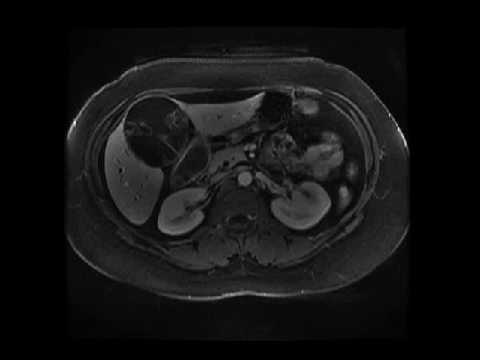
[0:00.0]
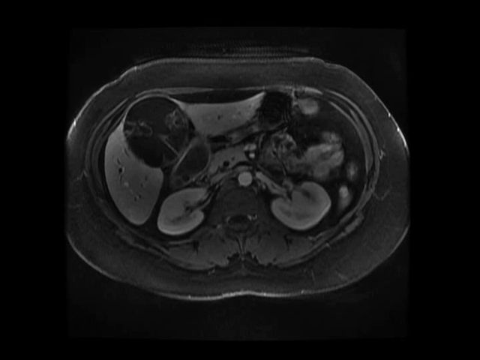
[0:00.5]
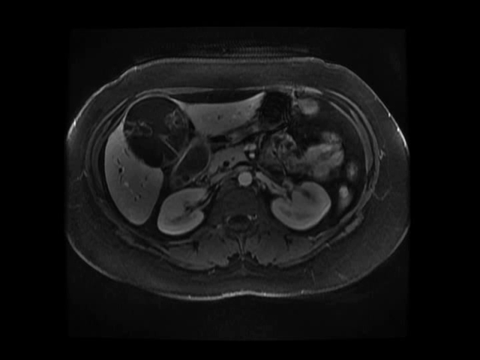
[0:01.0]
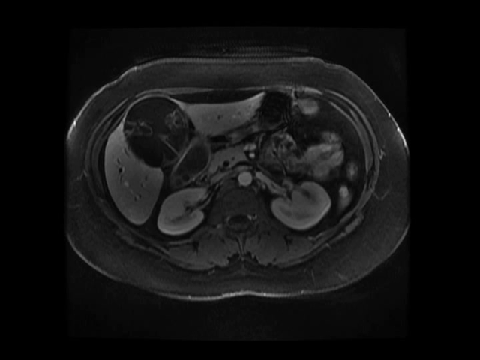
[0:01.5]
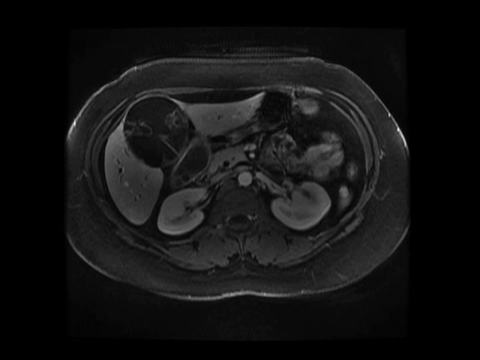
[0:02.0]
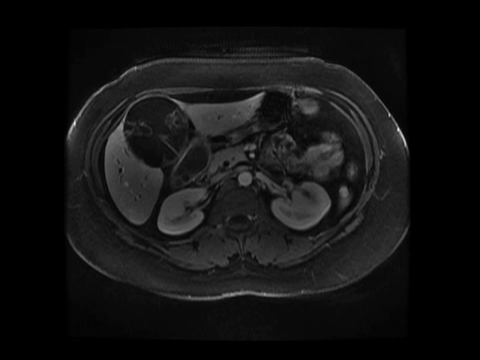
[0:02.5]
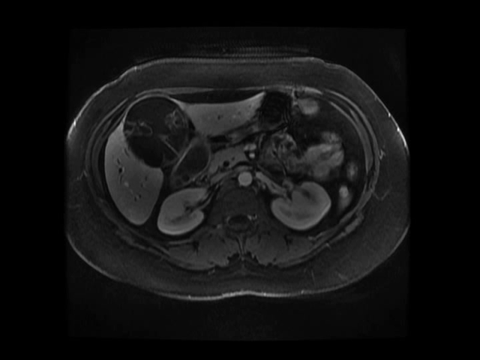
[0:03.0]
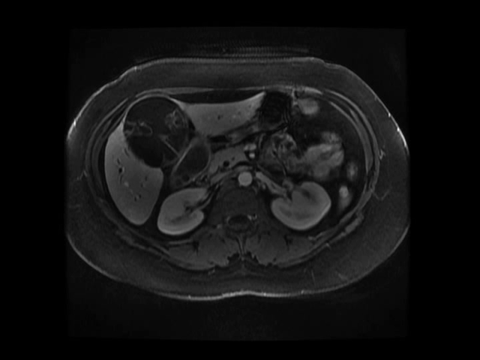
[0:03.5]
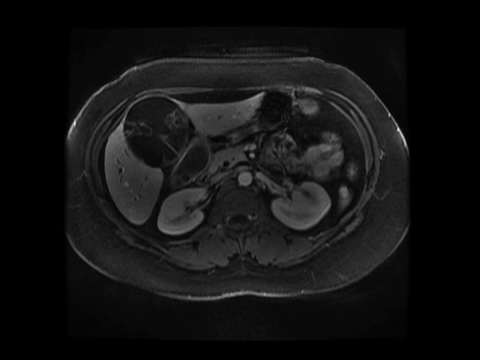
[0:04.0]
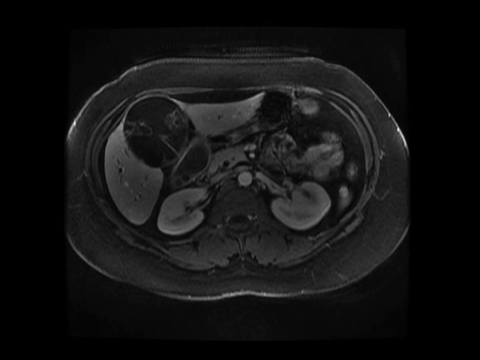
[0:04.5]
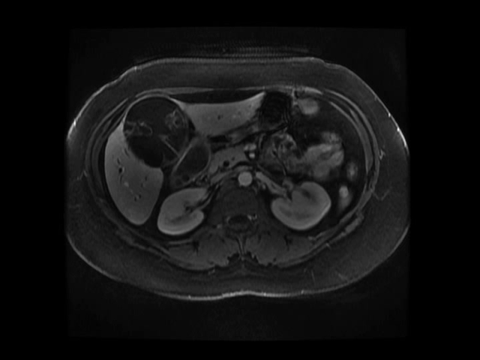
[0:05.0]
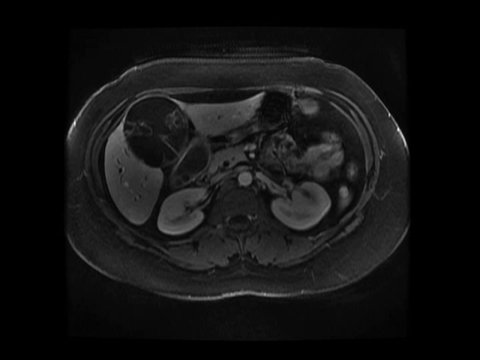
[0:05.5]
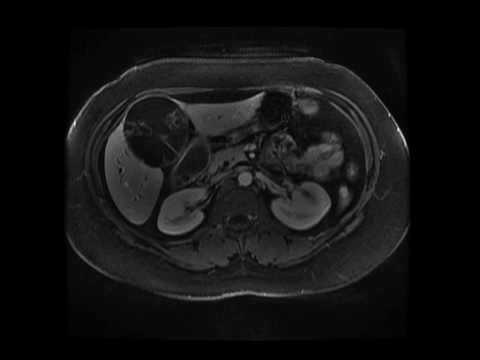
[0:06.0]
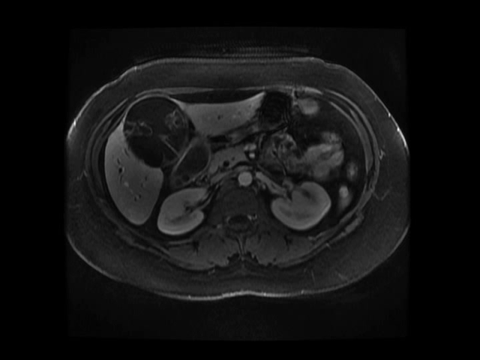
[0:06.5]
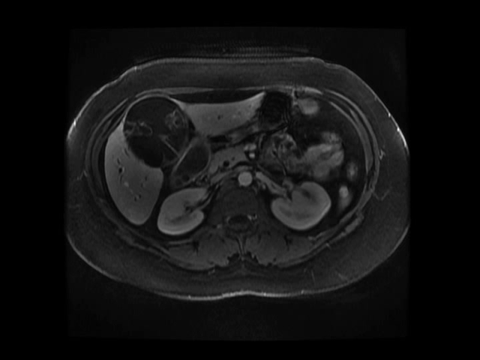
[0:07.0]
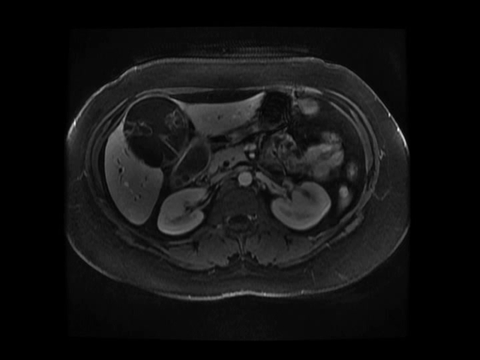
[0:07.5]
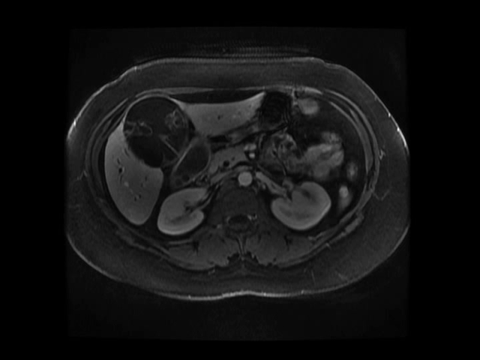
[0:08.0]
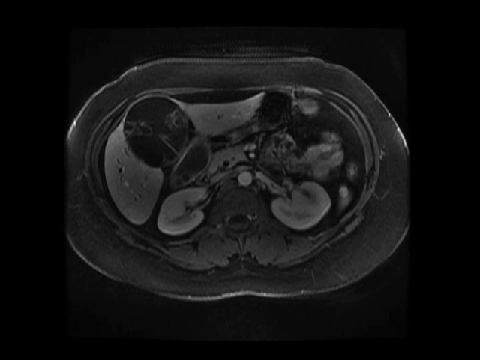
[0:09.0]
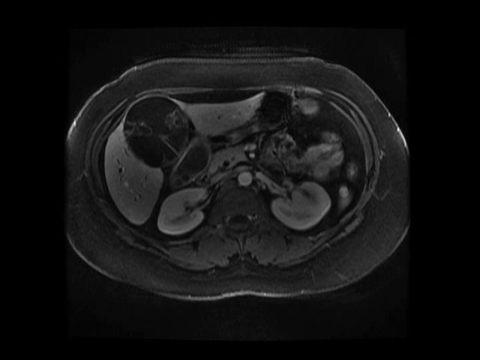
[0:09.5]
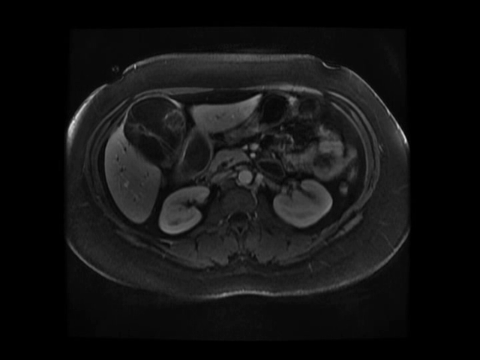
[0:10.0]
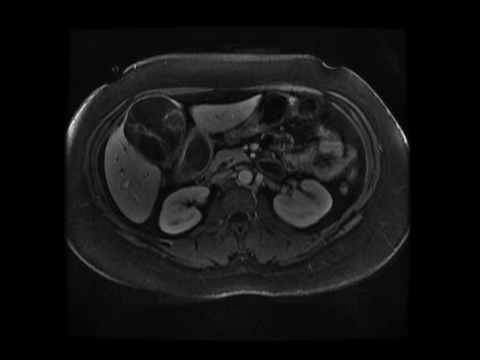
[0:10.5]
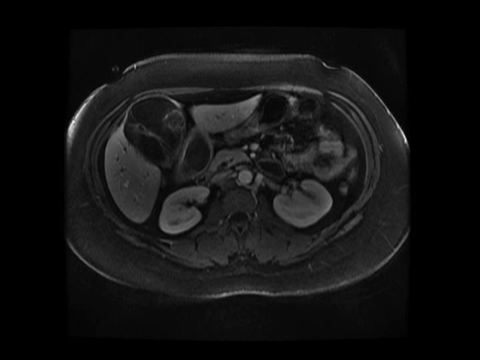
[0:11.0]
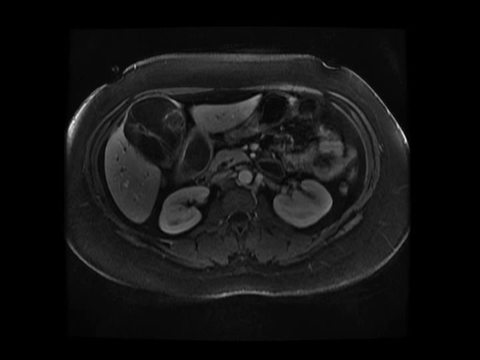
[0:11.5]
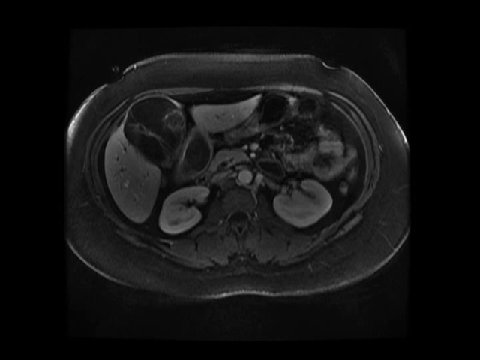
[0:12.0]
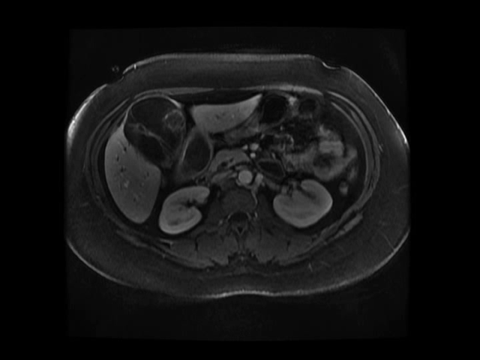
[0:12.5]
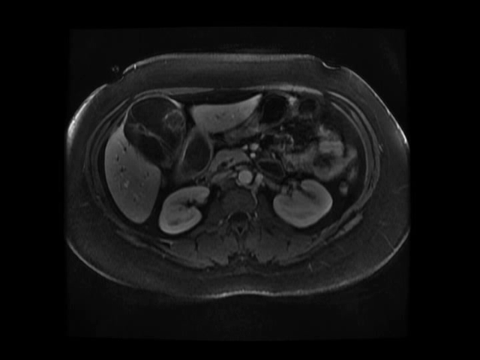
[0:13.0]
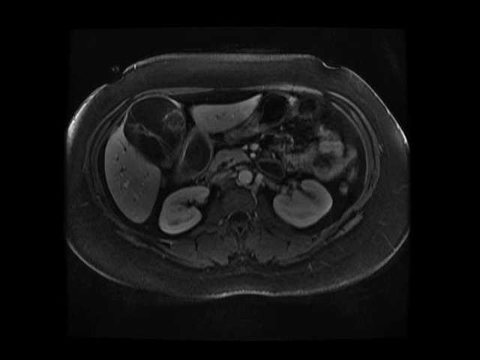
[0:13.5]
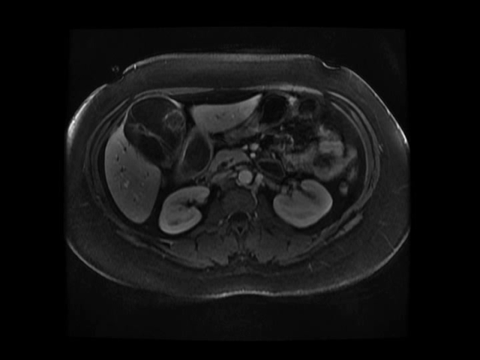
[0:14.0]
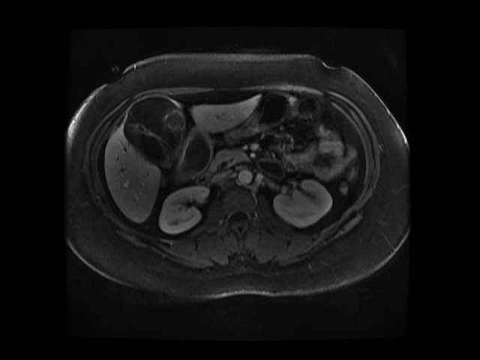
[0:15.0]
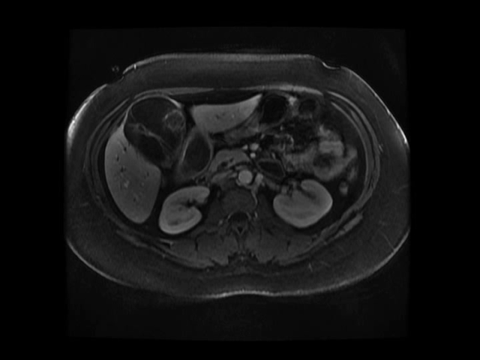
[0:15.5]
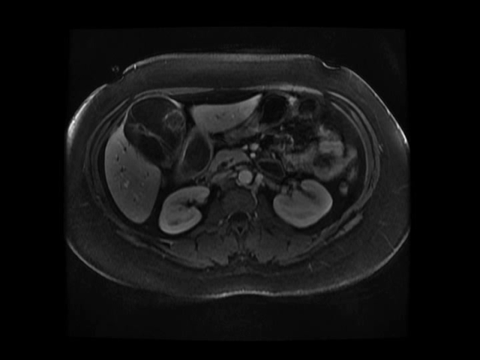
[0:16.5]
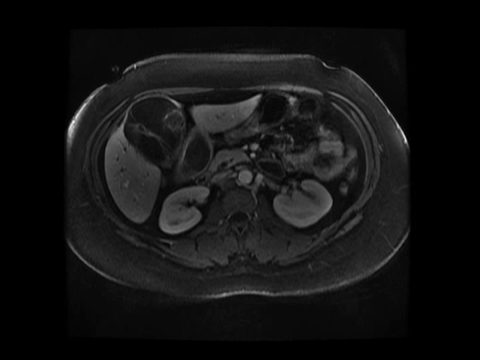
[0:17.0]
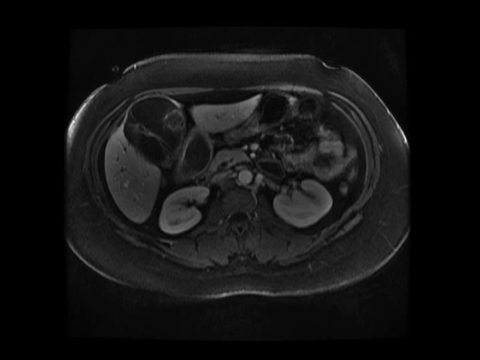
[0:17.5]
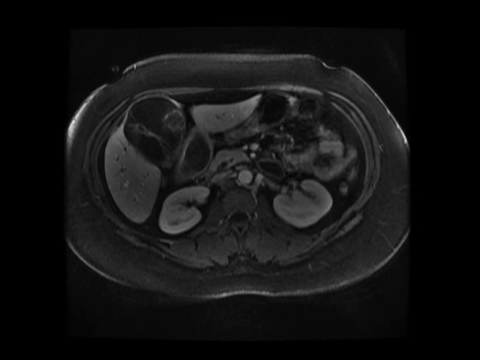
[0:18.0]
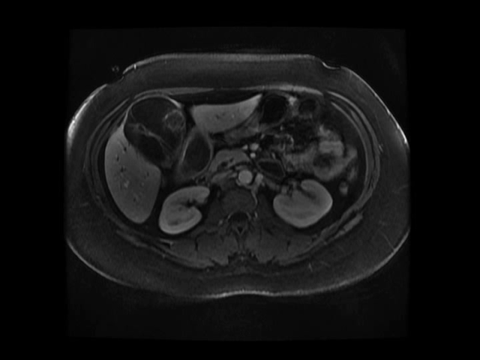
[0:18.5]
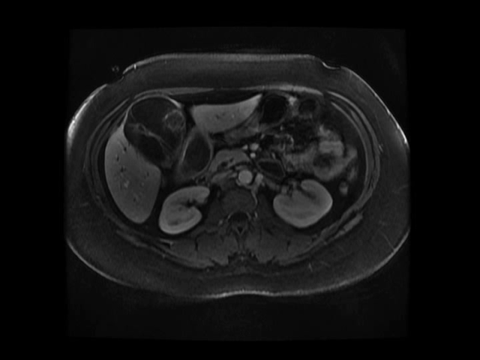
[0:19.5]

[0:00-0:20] A grayscale image appears that is probably an MRI. It seems to show a view from above, possibly of the abdomen or at least the central part of the body. The shape is oval, with a thick outline running in a ring around the middle part of the image that could be muscle and fat tissue. At the bottom there is a lighter gray area that could potentially be the spine. The image shifts slightly as the colouring and sizing change a little, possibly changing to another slide or MRI or another iteration of the image.